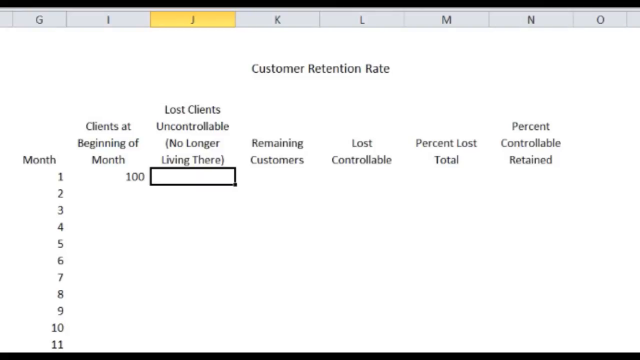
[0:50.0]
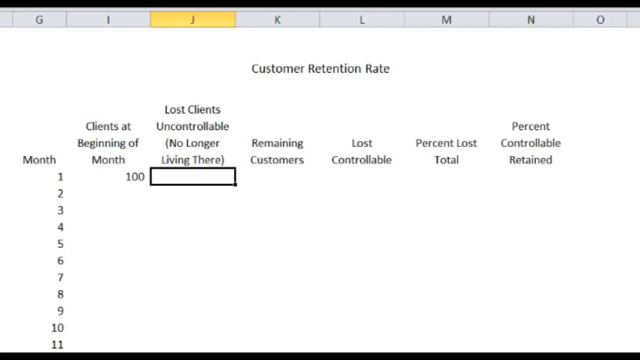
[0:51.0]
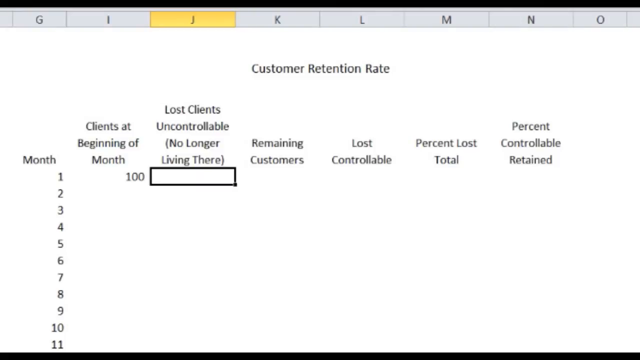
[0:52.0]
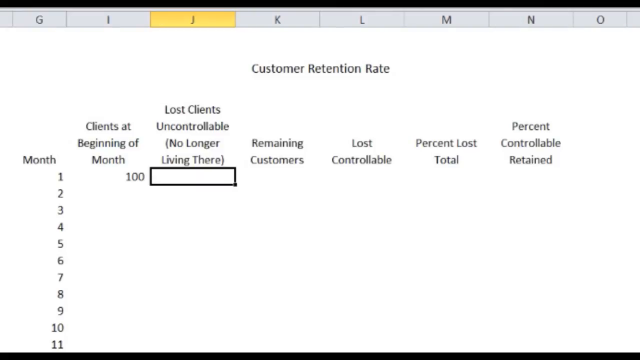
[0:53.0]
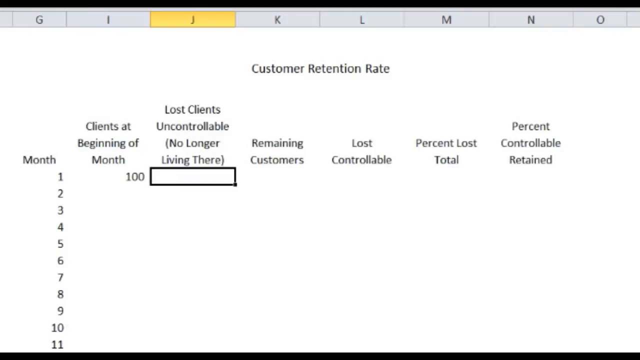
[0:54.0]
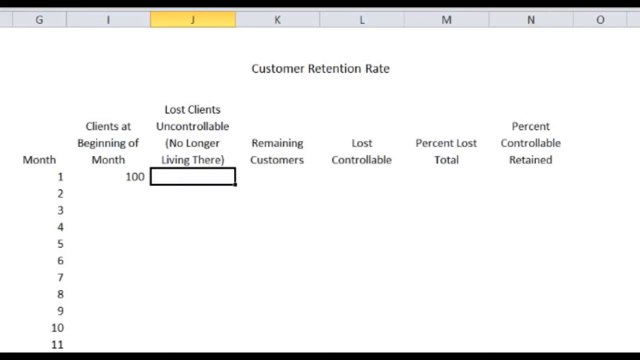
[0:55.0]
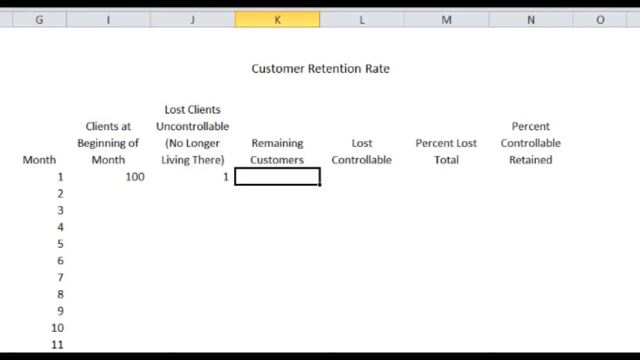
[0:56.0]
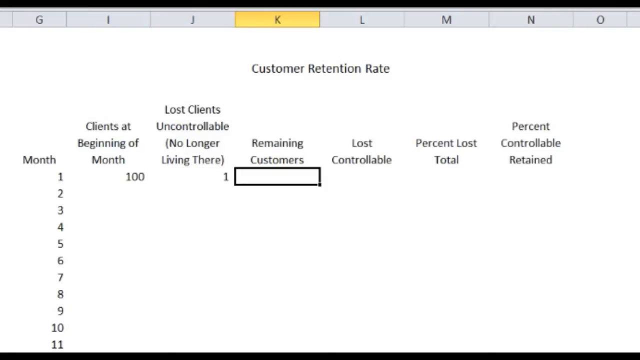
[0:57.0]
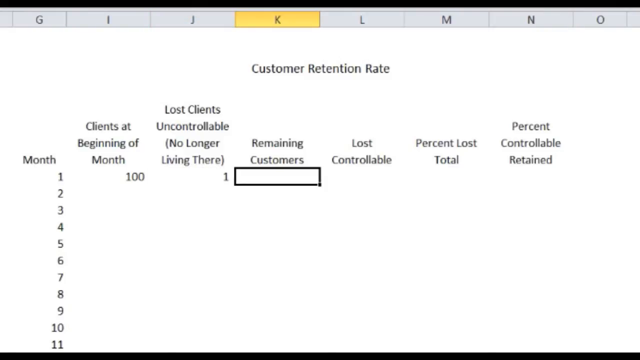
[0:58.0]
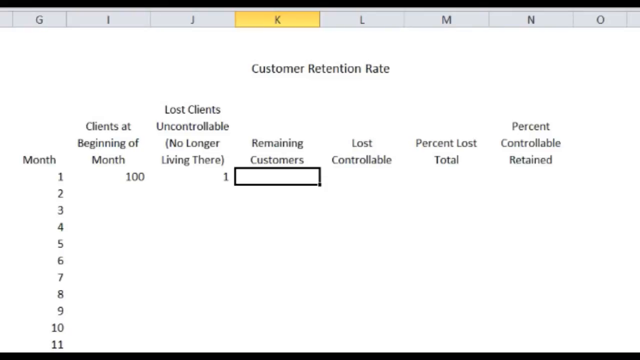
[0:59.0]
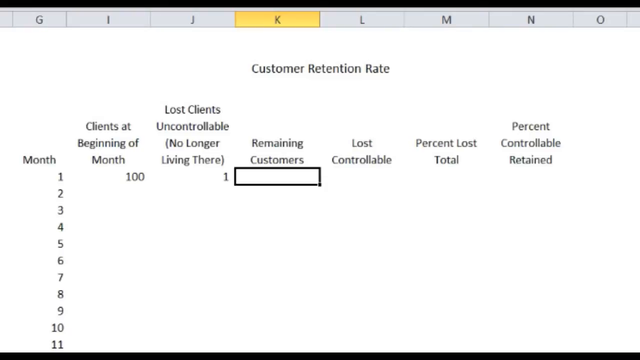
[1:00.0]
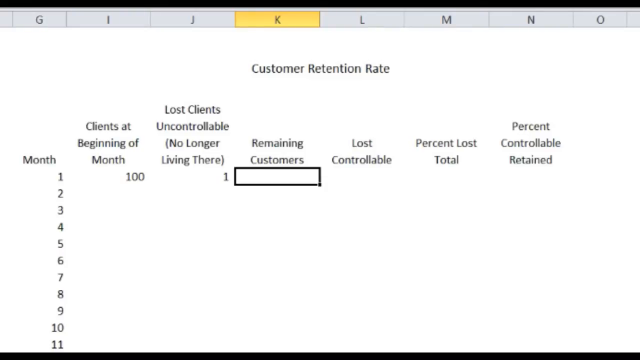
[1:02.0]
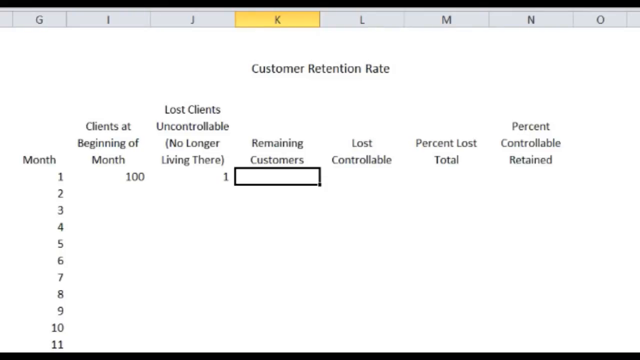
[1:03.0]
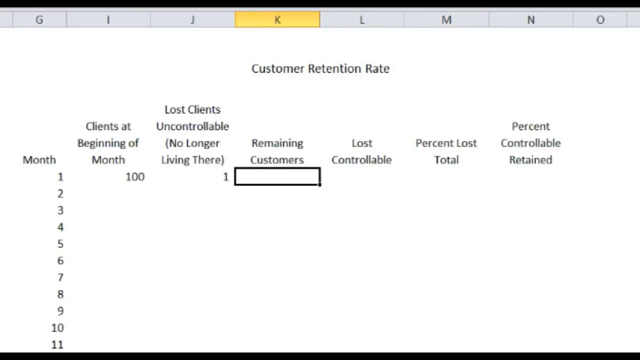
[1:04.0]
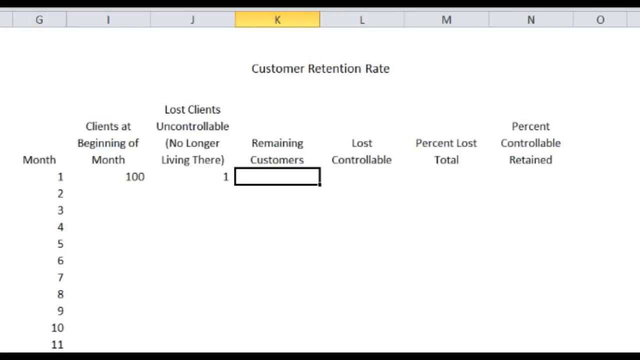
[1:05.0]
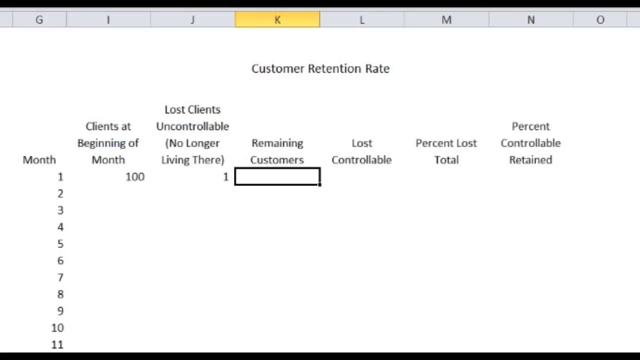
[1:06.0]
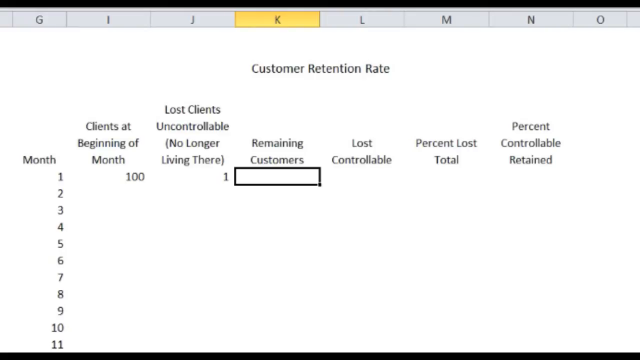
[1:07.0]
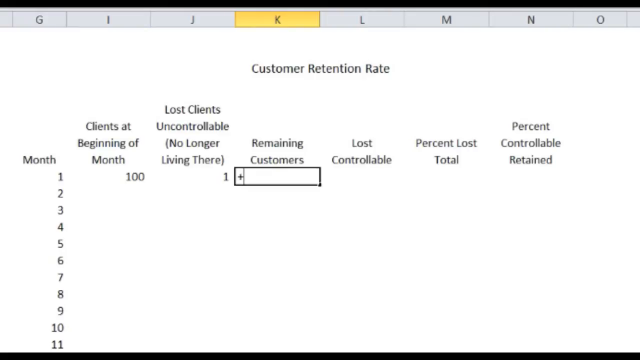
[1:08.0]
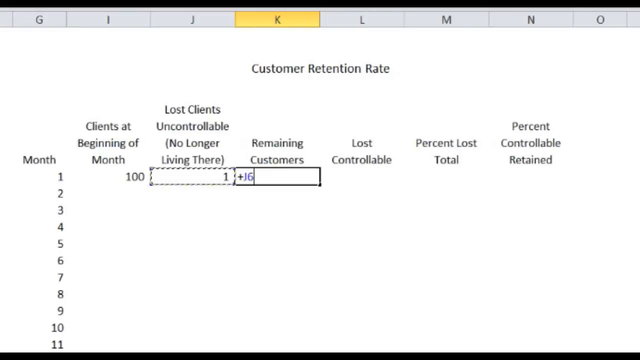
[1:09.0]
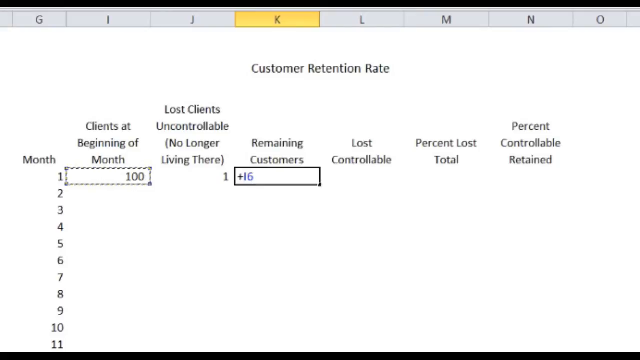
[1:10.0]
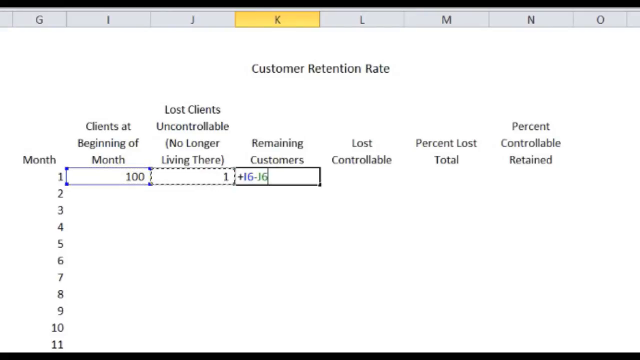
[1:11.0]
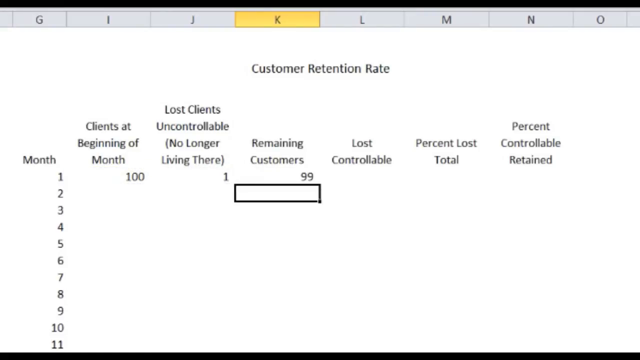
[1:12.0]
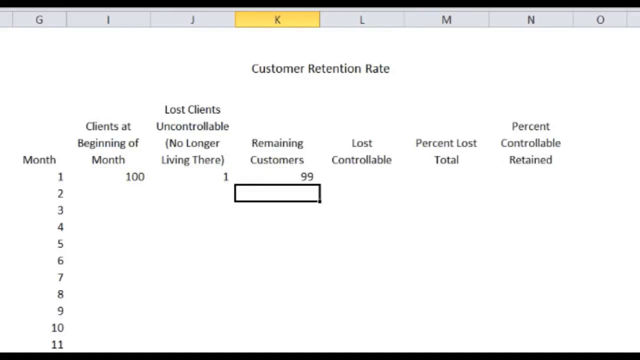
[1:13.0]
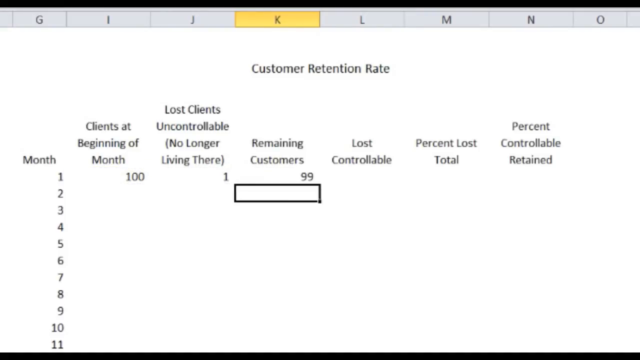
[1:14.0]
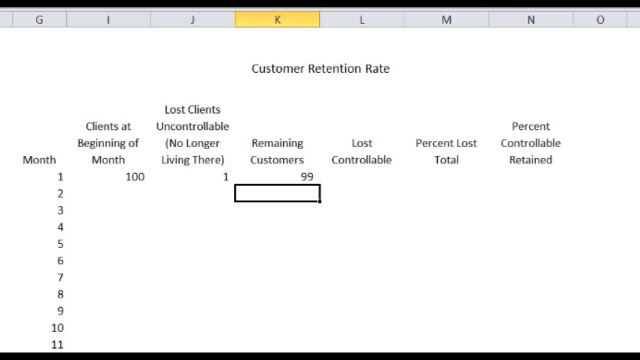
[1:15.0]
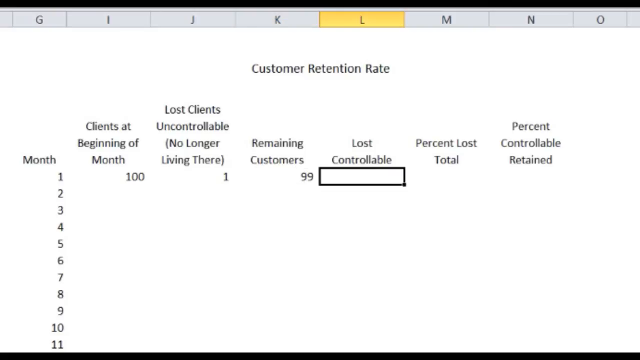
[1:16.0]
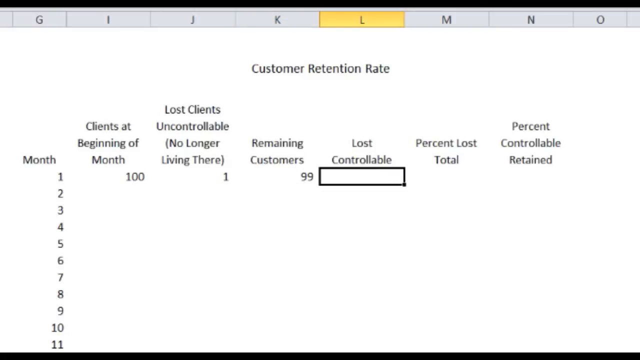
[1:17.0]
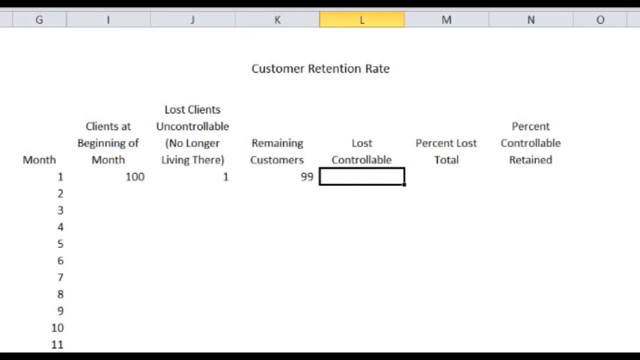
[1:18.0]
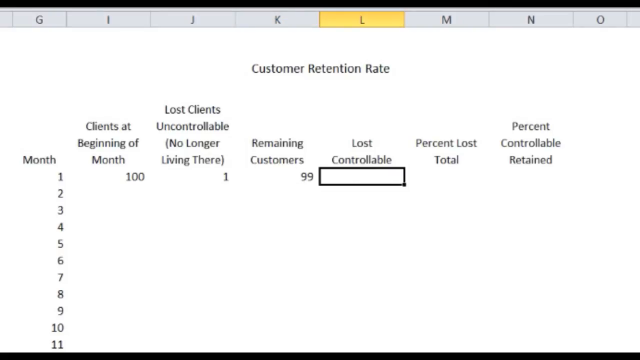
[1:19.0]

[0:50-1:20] The same Excel spreadsheet has "Customer retention rate" as its top title. The first column is "Month", with the numbers one, two, three in ascending order. Next to it is "Clients at the beginning of the month", already filled in with the number 100, followed by "Lost clients uncontrollable, no longer living there", "Remaining customers", "Lost controllable", "Percent lost total" and "Percent controllable retained". The lost clients uncontrollable column is filled in with a one for the first month, and a formula is entered for remaining customers: the clients at the beginning of the month, 100, minus the lost clients uncontrollable, one, which equals 99. The spreadsheet is a basic Excel spreadsheet in regular black font.